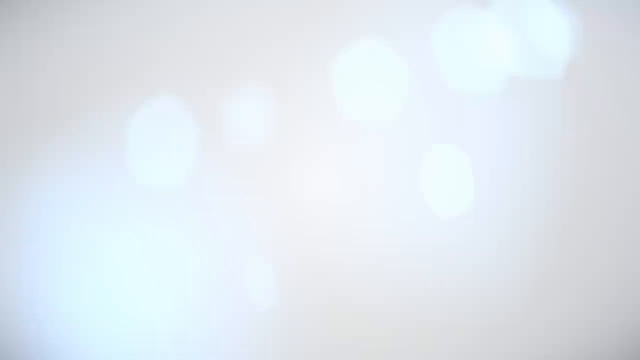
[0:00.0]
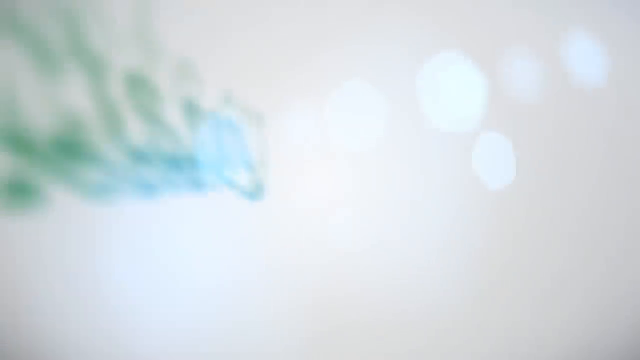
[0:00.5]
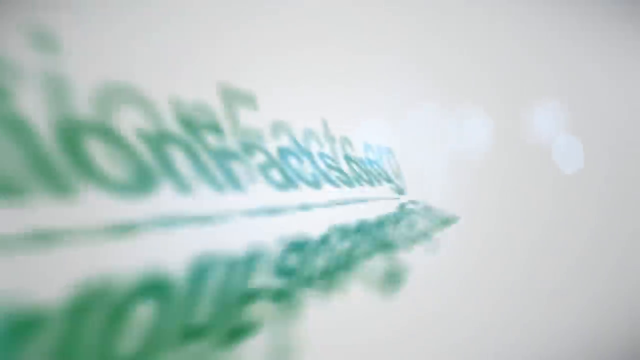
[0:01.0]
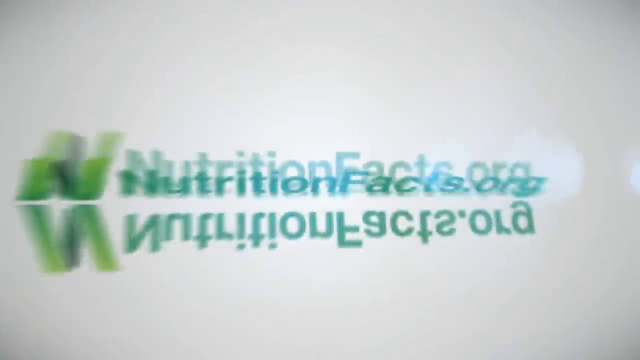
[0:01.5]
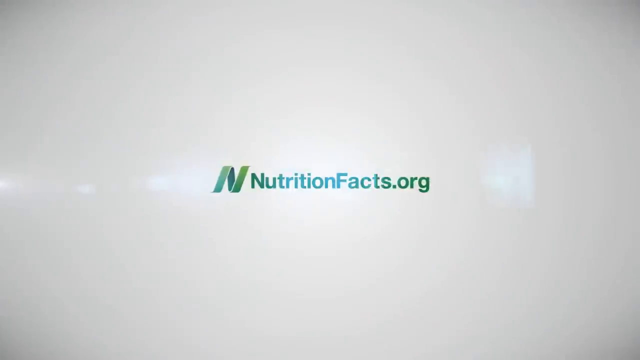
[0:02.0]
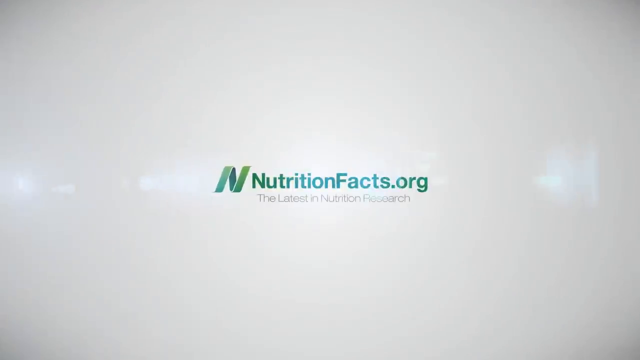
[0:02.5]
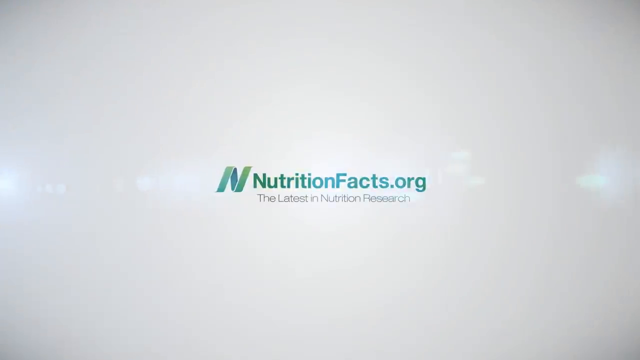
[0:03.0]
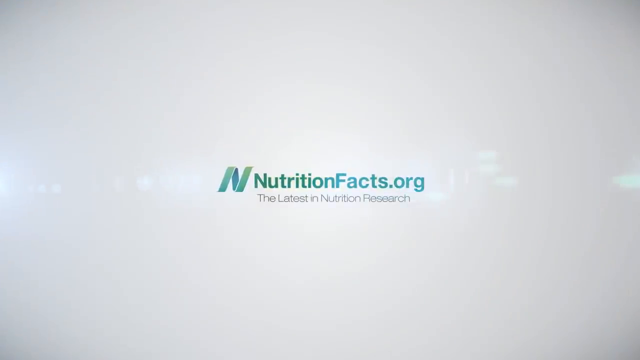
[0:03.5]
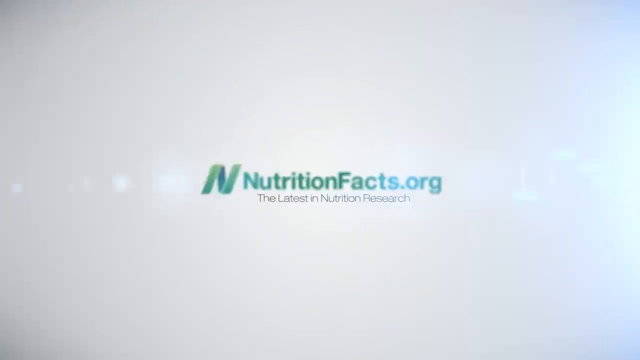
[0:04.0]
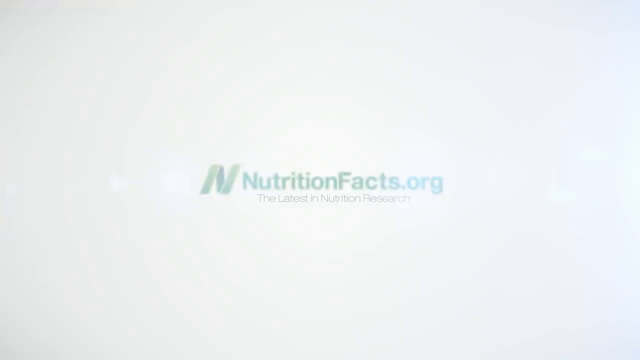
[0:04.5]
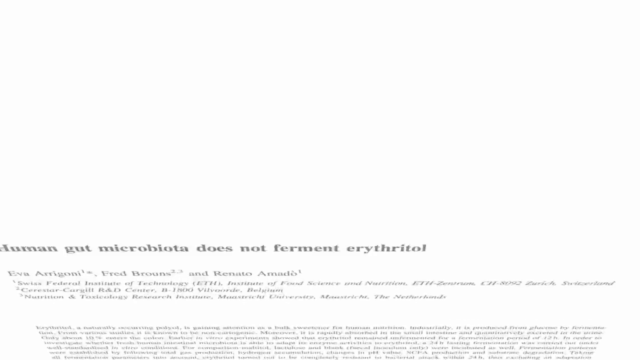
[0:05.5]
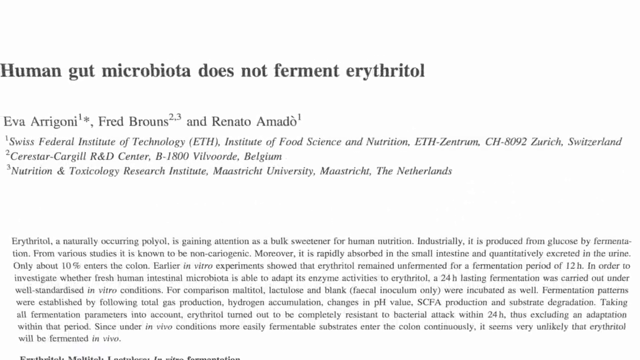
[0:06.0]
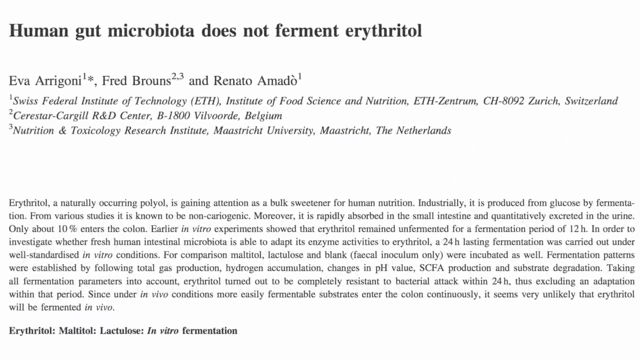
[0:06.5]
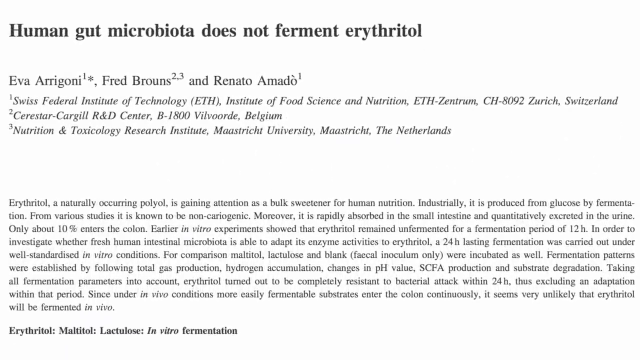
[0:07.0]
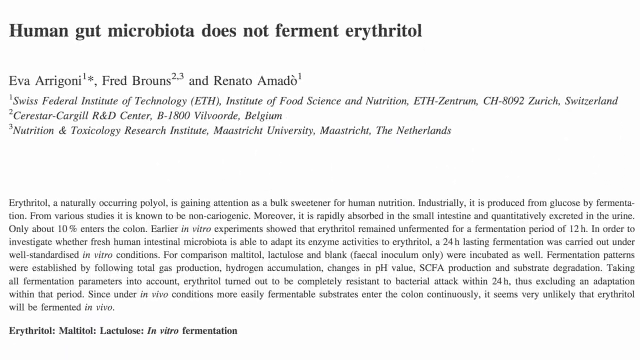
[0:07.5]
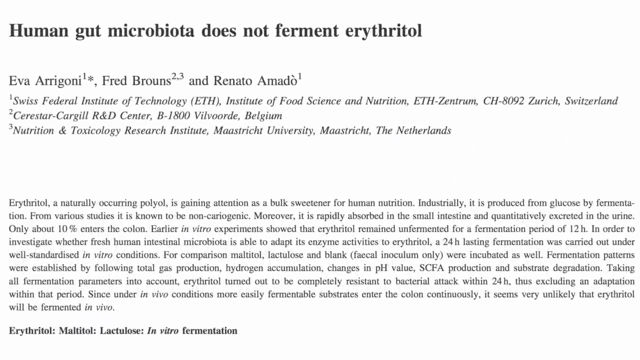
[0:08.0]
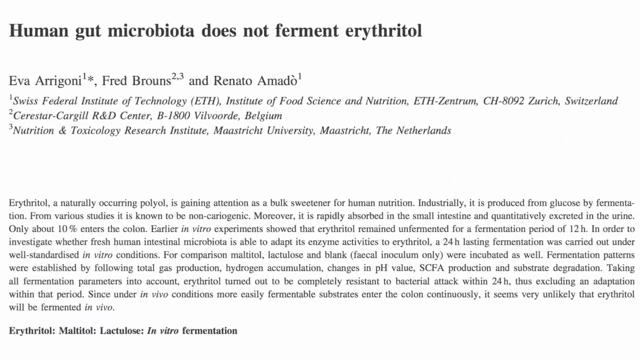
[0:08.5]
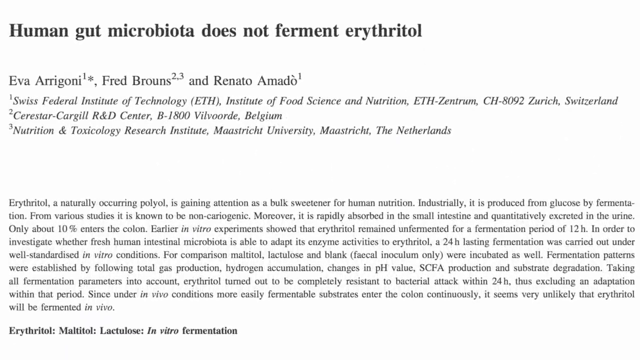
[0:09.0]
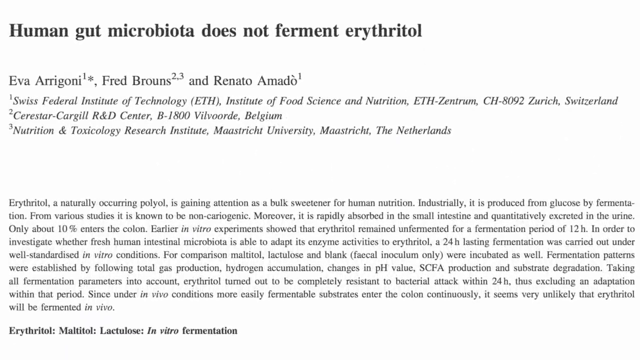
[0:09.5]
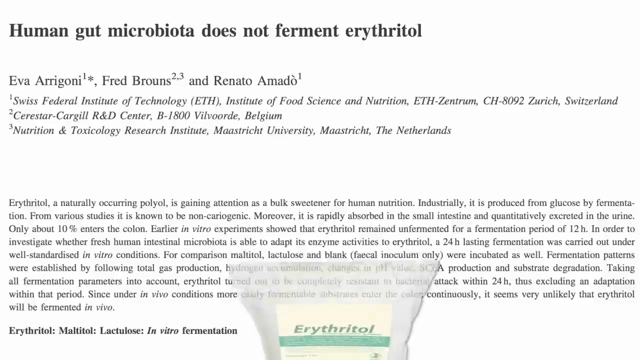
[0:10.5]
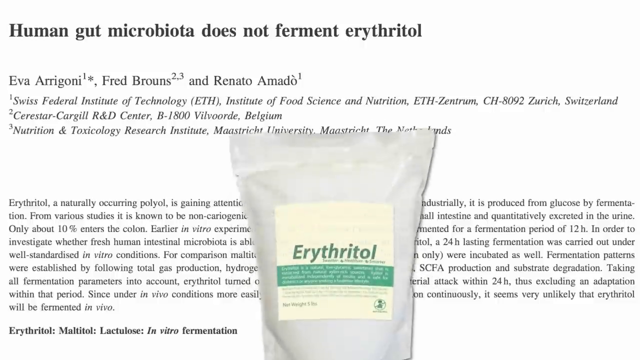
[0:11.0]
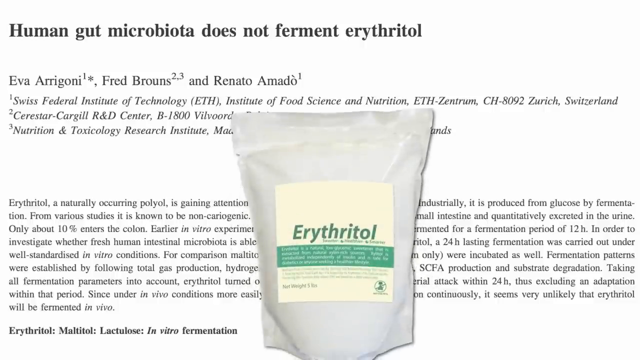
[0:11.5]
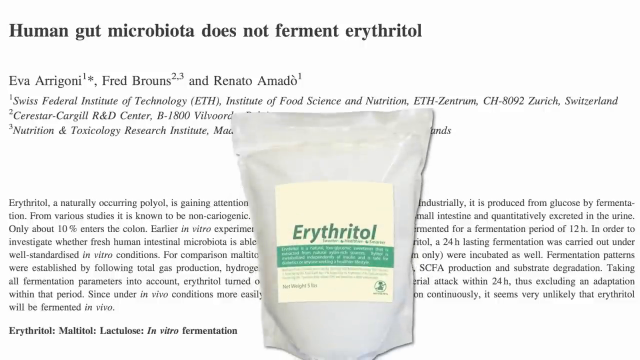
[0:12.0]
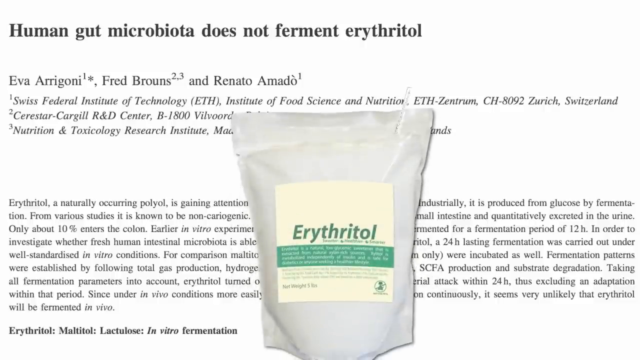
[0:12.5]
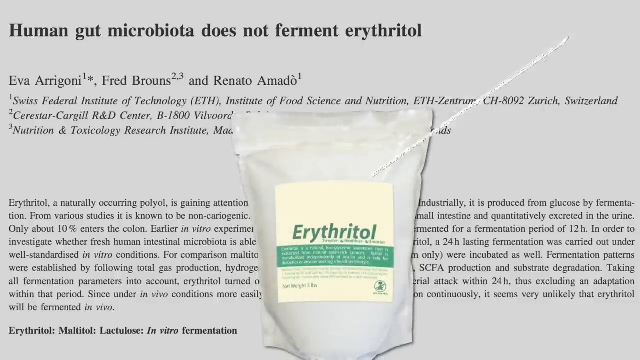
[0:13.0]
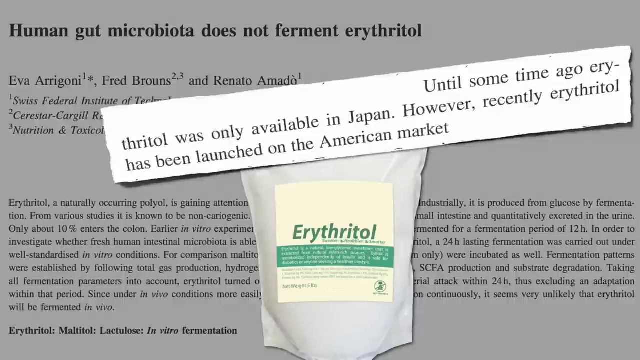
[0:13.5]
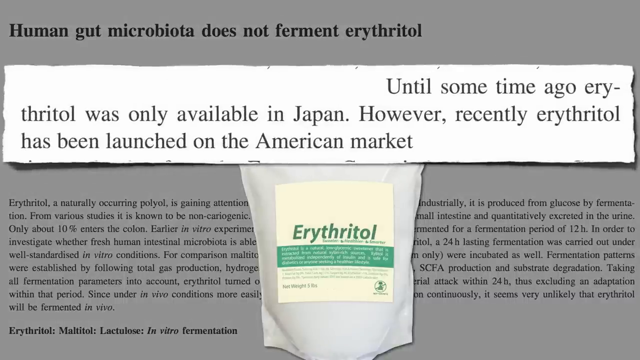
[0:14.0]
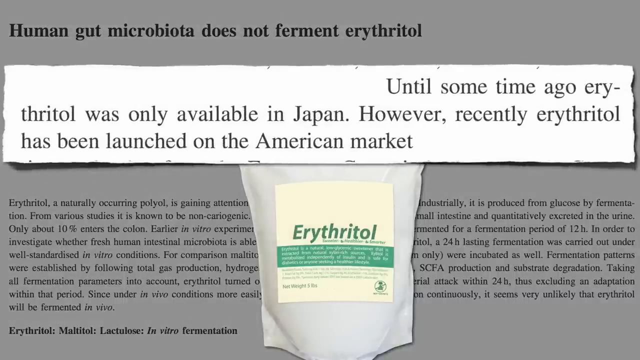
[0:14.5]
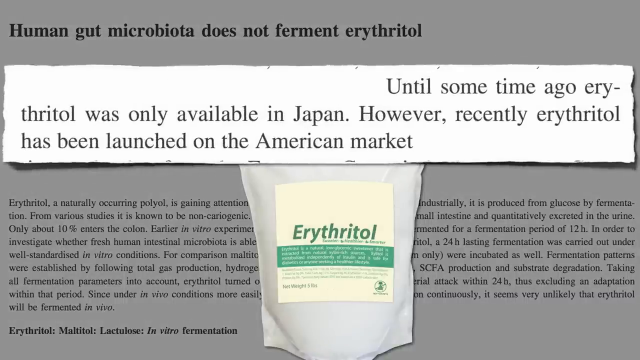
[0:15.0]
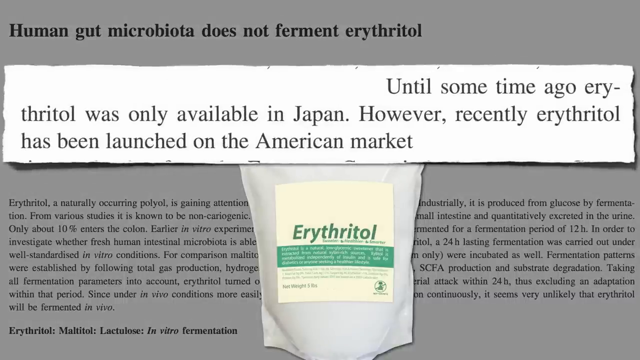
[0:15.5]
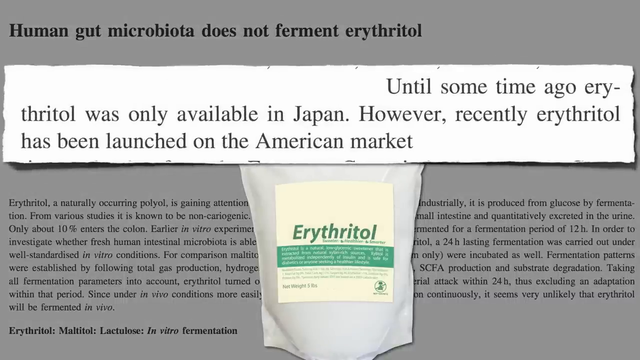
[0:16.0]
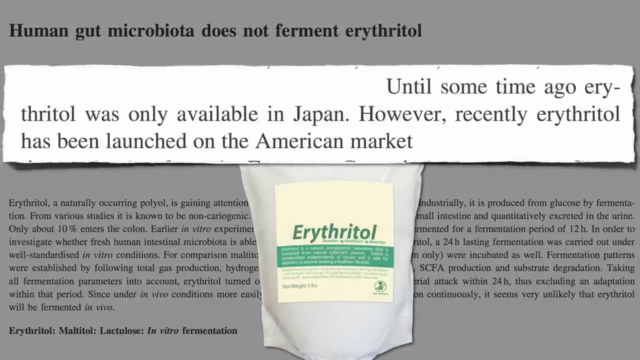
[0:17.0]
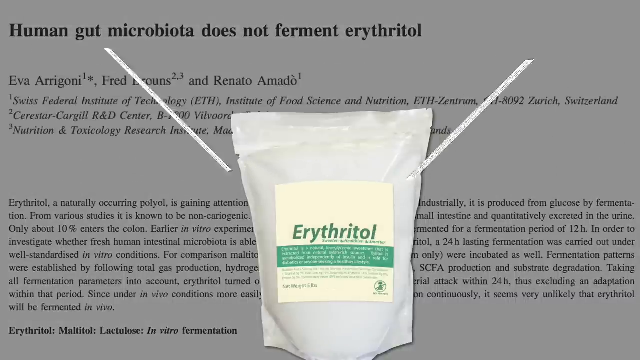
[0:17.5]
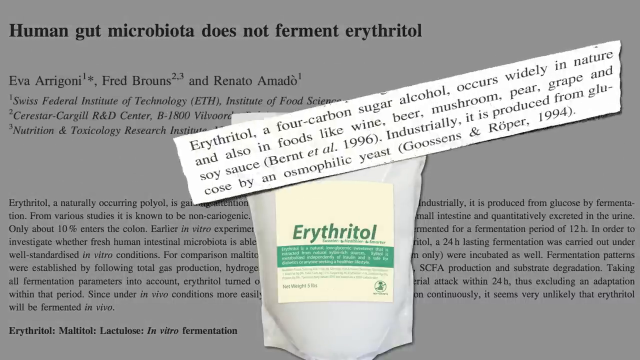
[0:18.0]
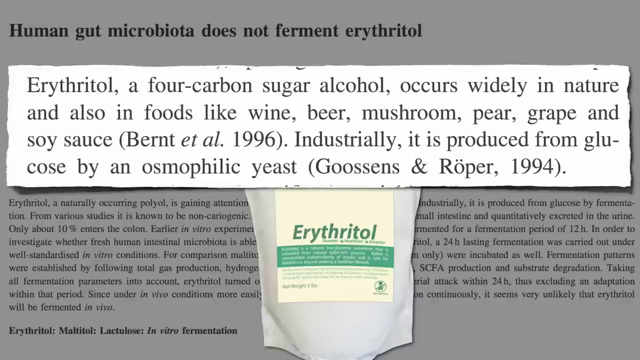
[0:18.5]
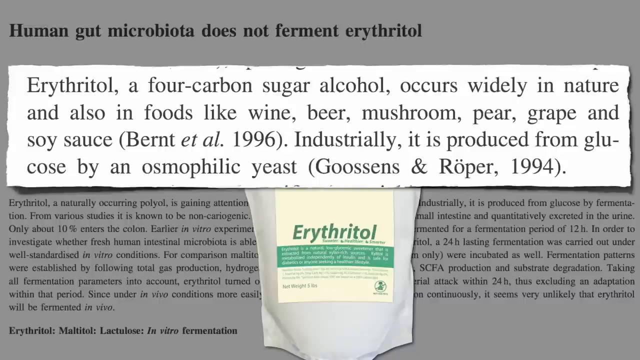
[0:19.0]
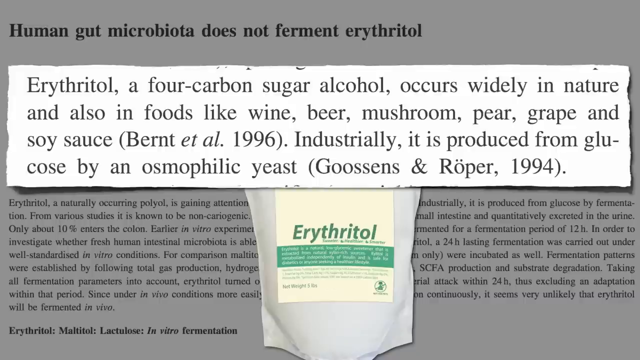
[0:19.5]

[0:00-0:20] The video begins with a white background showing a green N in the center. Next to the N is the text "nutritionfacts.org" and "The latest in nutritional research." The video then switches to a document with a white background and black text. At the top it reads "human gut microbiota does not ferment erythritol." Below are the names Eva Arrigoni, Fred Brouns and Renato Amato, followed by "Swiss Federal Institute of Technology (ETH)", "Institute of Food Science and Nutrition, ETH ZENTRUM", "CH 8092 Zurich, Switzerland", "CERESTAR-CARGILL R&D center, B-1800 BIBLBOORDE, Belgium" and "Nutrition and Toxicology Research Institute, MAASTRICHT University, MAASTRICHT The Netherlands." At the bottom, in black text, it reads: "erythritol, a naturally occurring polyol, is gaining attention as a bulk sweetener for human nutrition. Industrially, it is produced from glucose by fermentation. From various studies, it is known to be non-cariogenic."